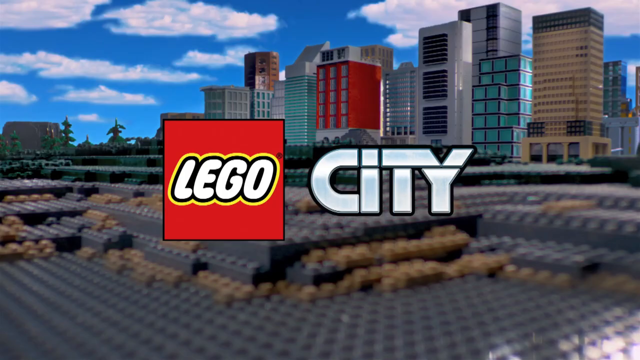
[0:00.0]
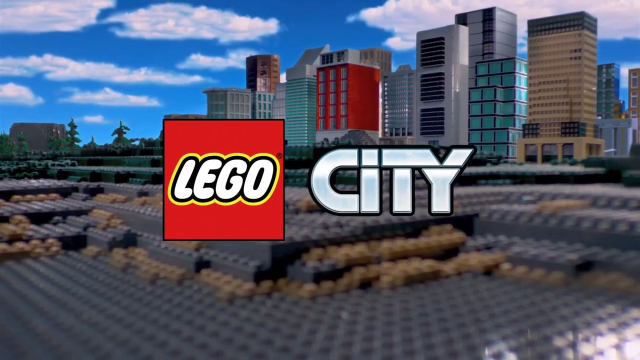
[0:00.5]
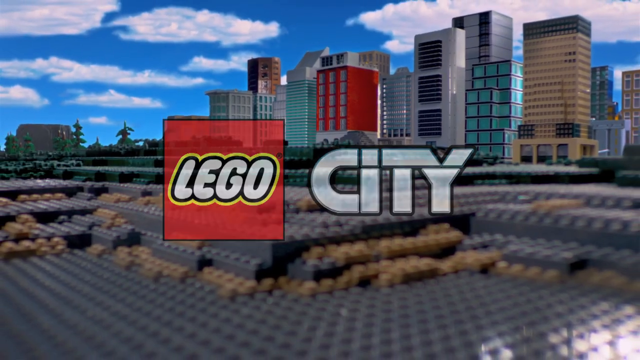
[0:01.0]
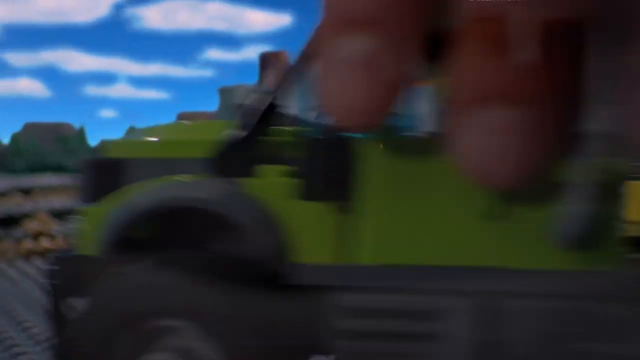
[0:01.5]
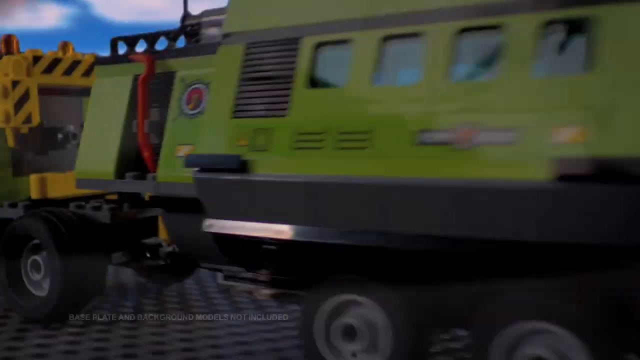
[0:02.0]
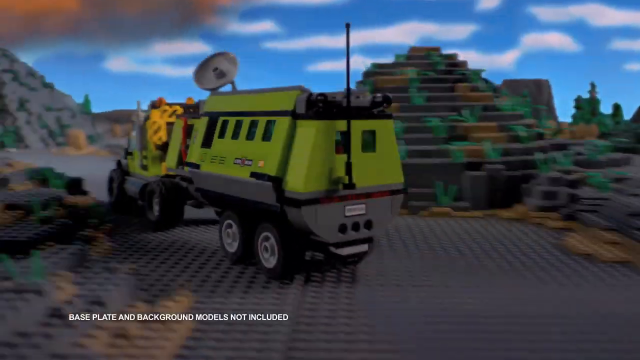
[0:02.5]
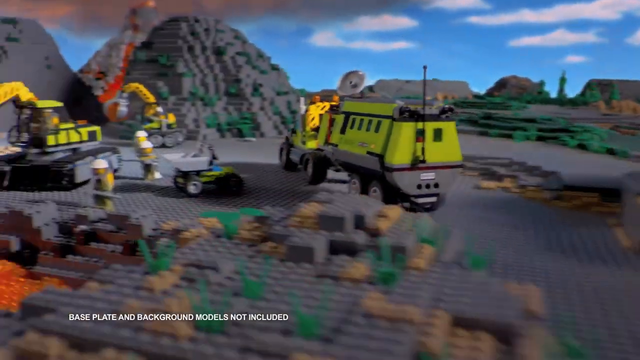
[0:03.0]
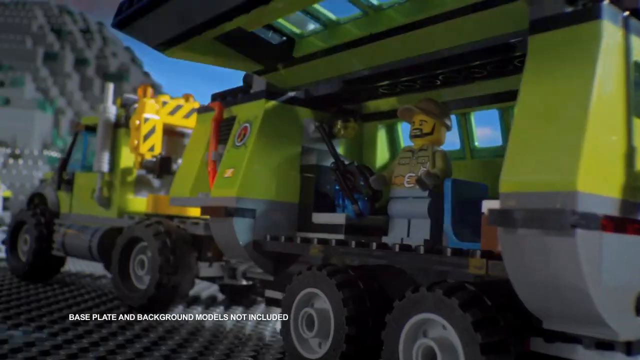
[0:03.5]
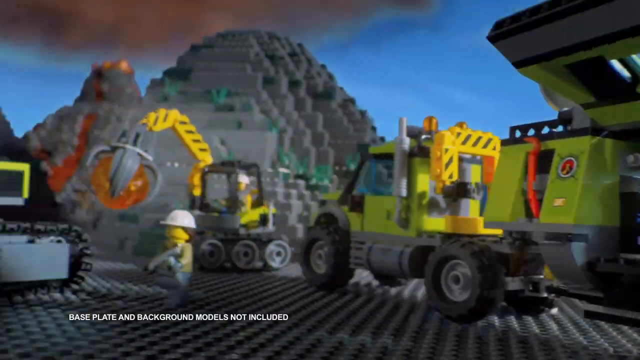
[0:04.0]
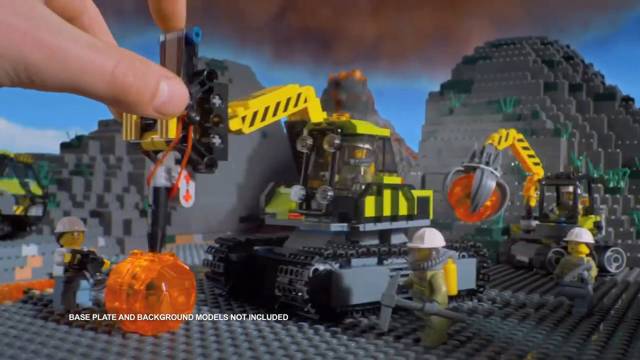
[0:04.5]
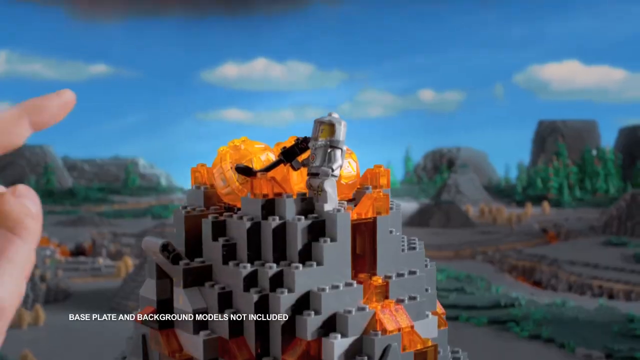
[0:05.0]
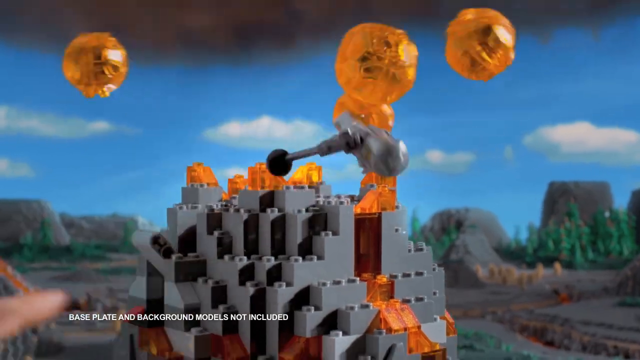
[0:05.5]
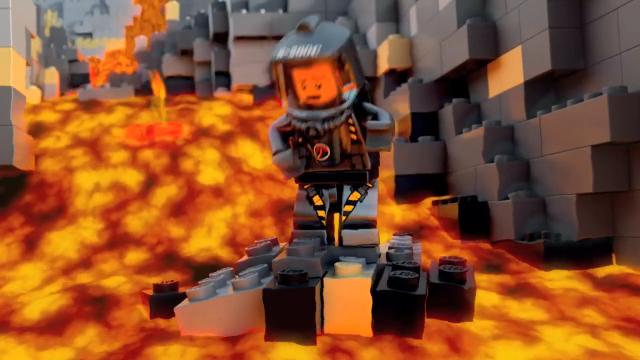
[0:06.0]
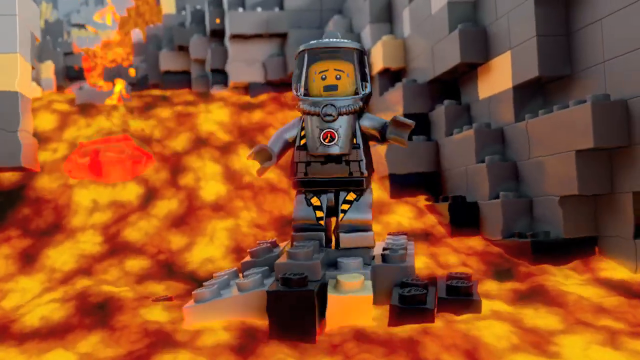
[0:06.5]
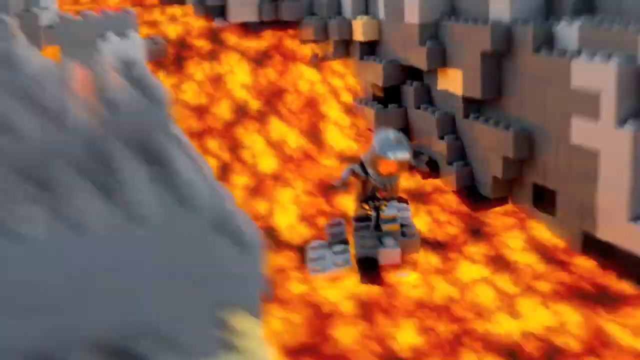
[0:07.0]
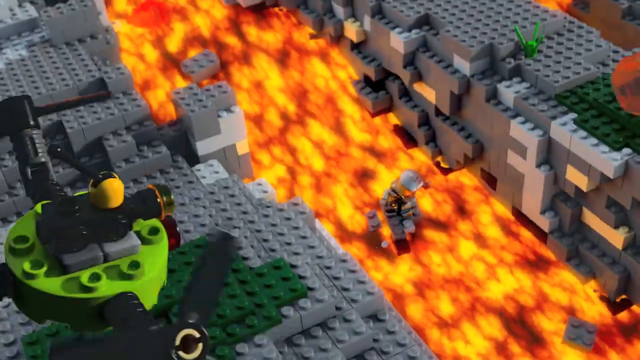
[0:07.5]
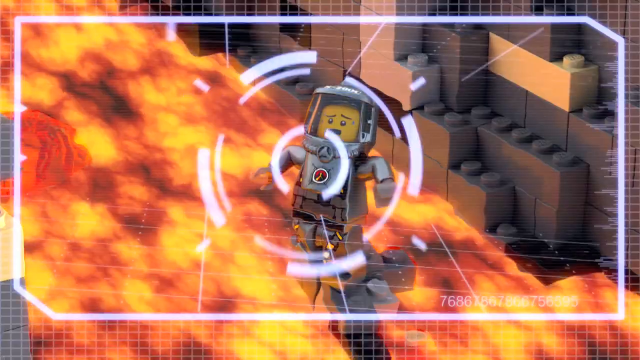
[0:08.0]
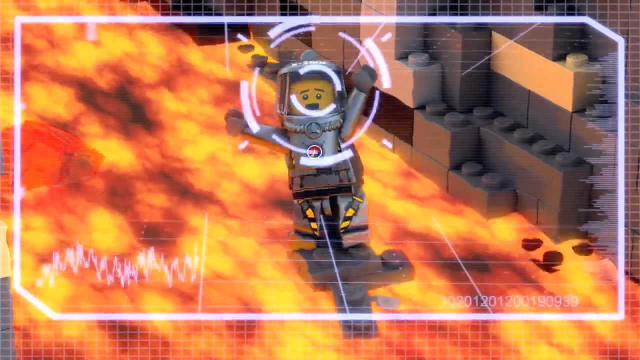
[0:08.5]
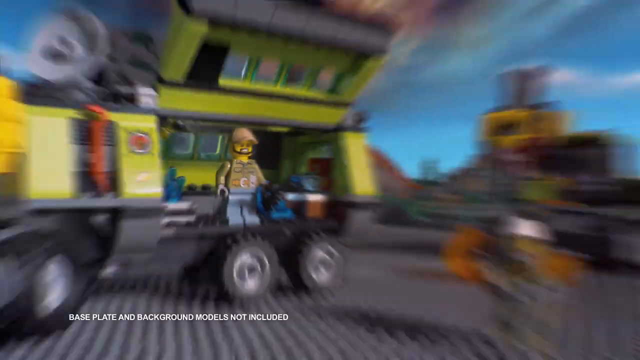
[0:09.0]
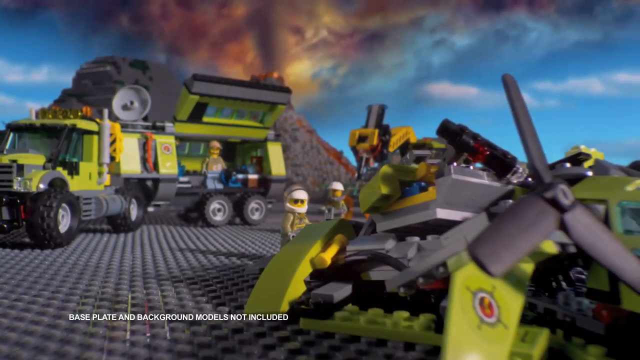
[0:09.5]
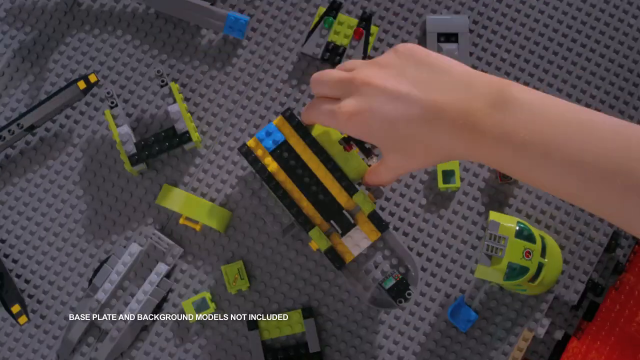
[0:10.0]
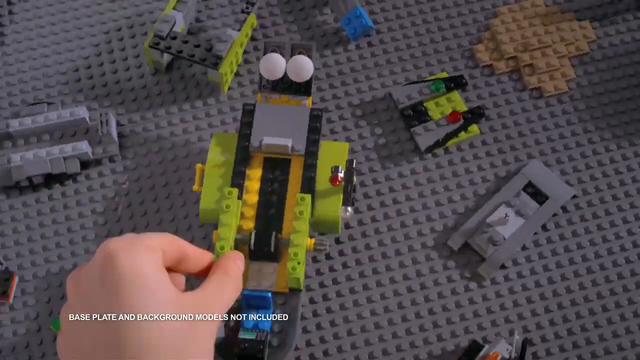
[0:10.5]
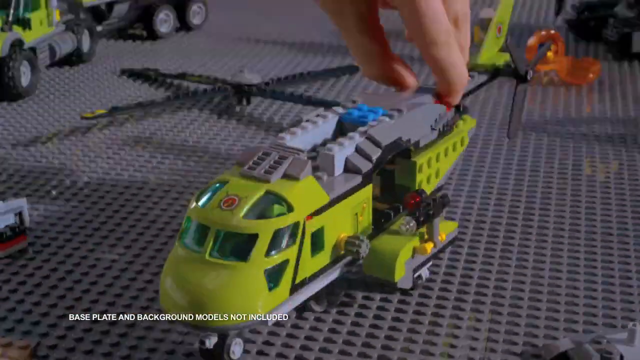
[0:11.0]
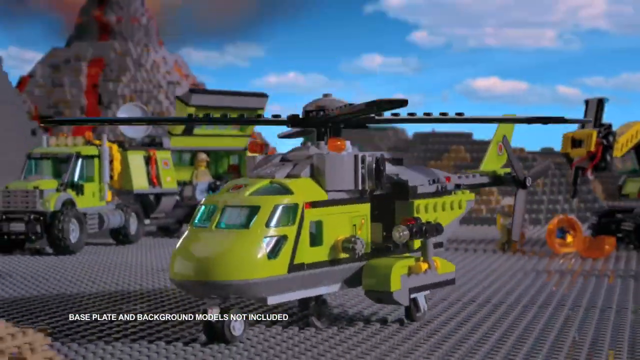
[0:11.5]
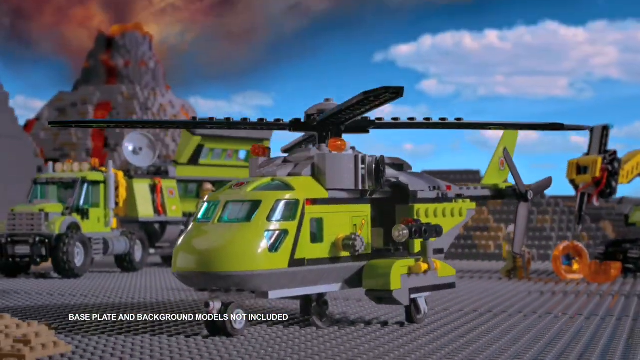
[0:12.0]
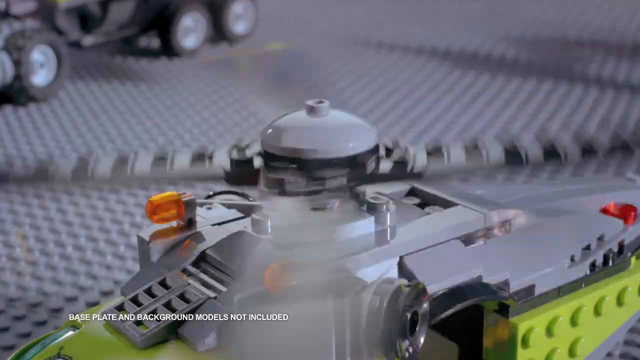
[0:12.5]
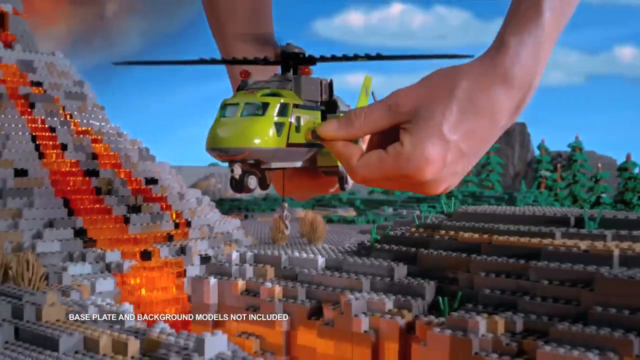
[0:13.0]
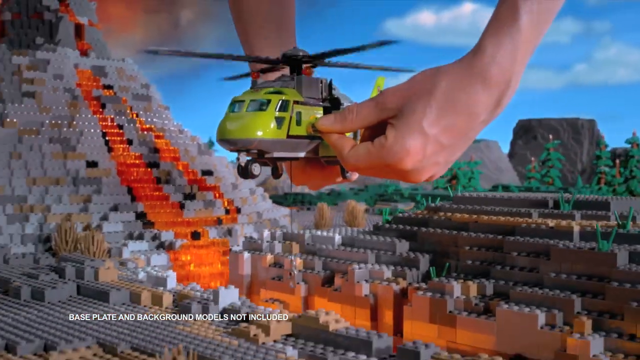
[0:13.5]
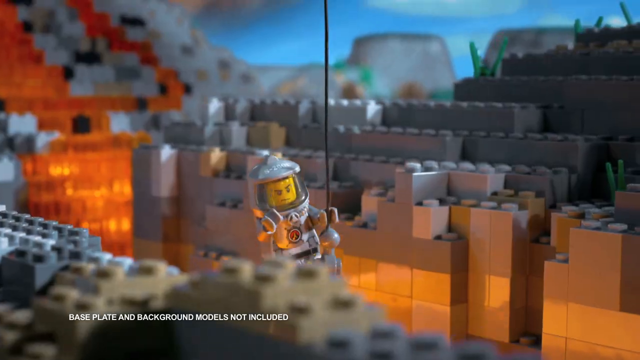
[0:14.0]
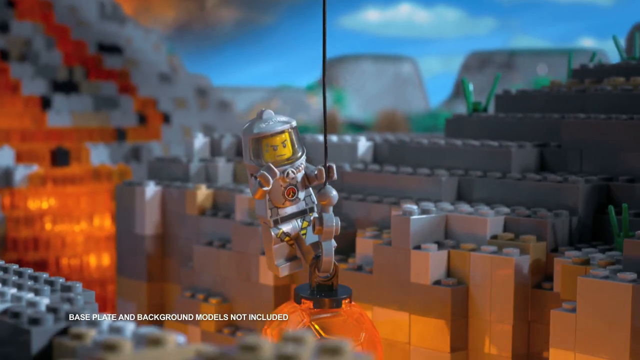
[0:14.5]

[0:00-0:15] The video, called Volcano Lego City 2016 Mini Movie, opens with a lot of what appear to be Lego heavy equipment out on a large construction site or a mine. A real human is then shown playing with the toys as if they were real. A large truck that comes in from the right-hand side is yellow on top with a grey bottom. The video then flashes back and forth with the Lego City logo. A little Lego man floats on top of a piece of something flowing through a lava river, and his small platform slowly sinks or is eaten by the lava. At the last minute he is saved by what appears to be a crane, which hoists him out of the lava river.